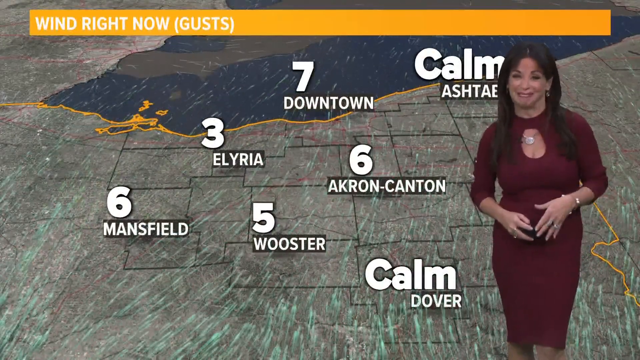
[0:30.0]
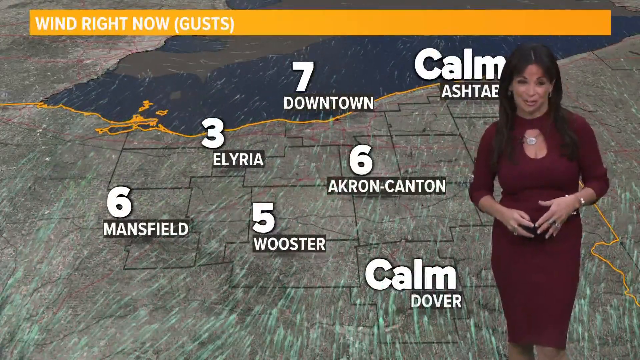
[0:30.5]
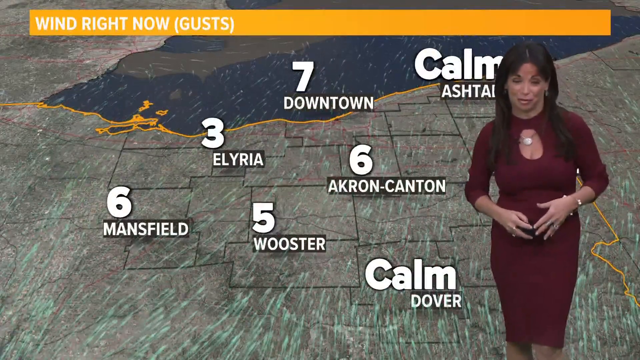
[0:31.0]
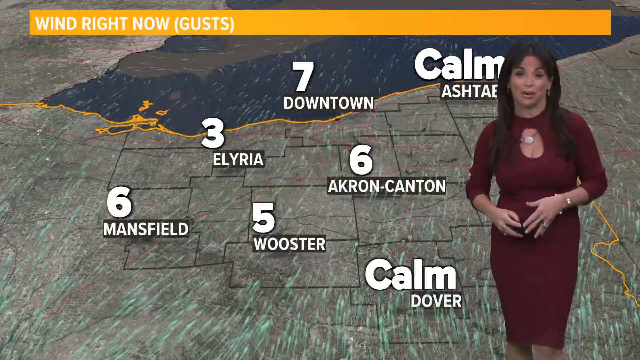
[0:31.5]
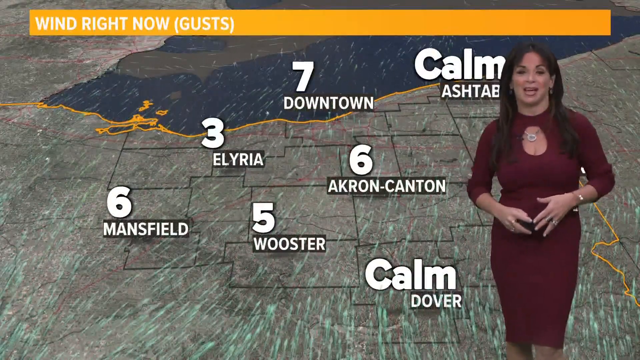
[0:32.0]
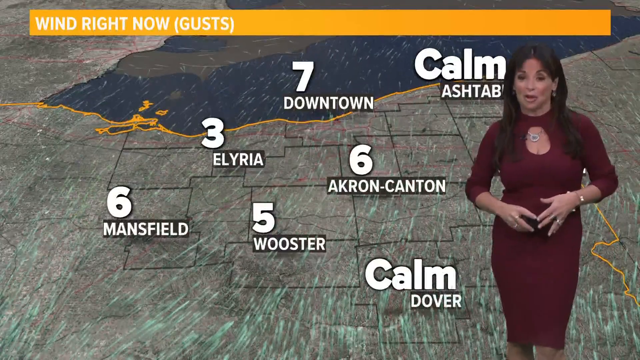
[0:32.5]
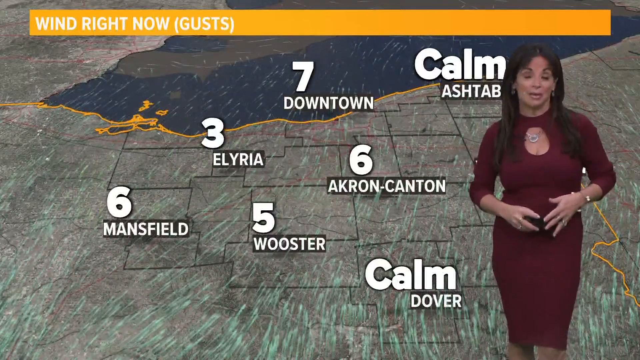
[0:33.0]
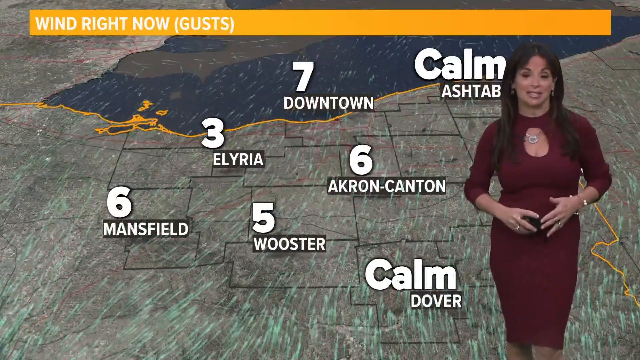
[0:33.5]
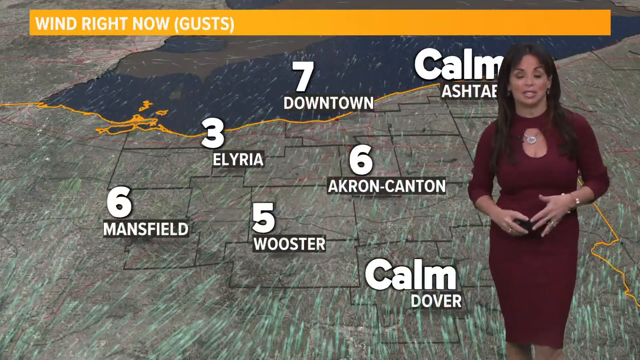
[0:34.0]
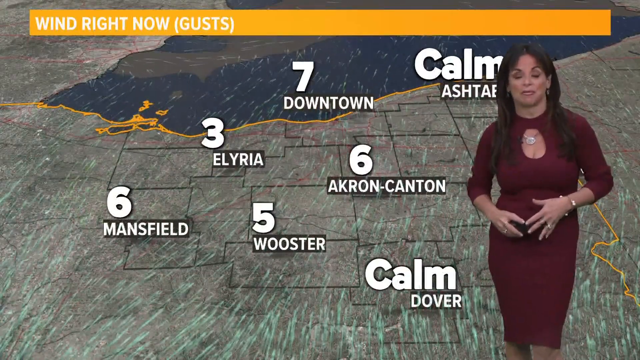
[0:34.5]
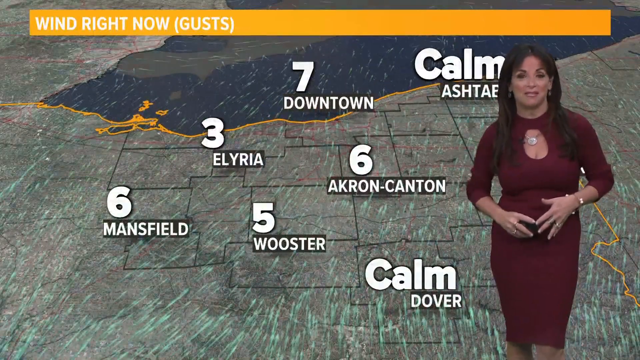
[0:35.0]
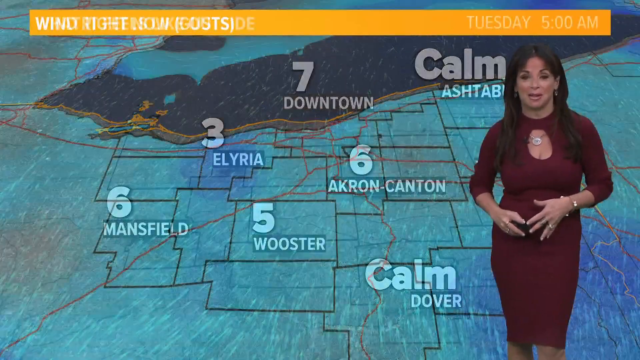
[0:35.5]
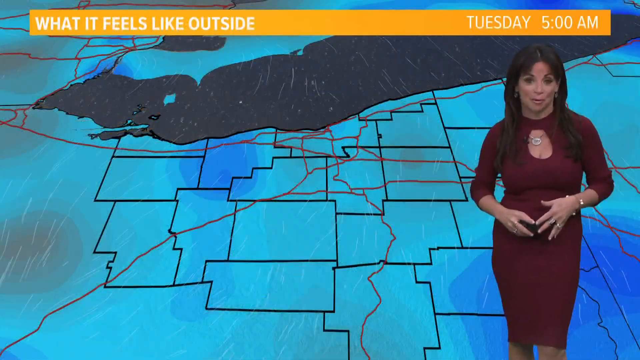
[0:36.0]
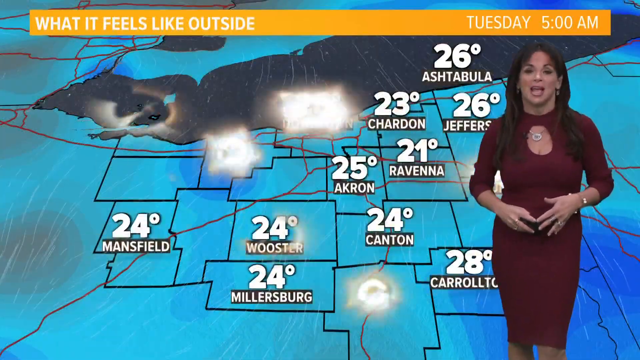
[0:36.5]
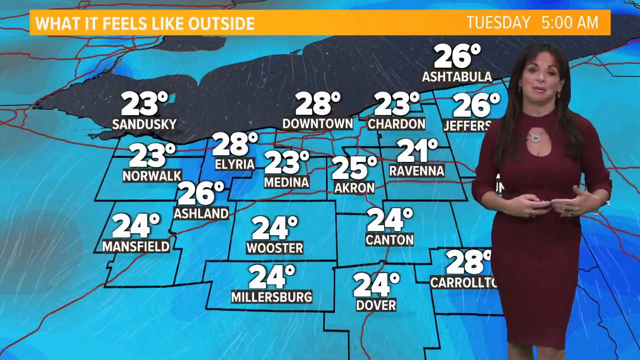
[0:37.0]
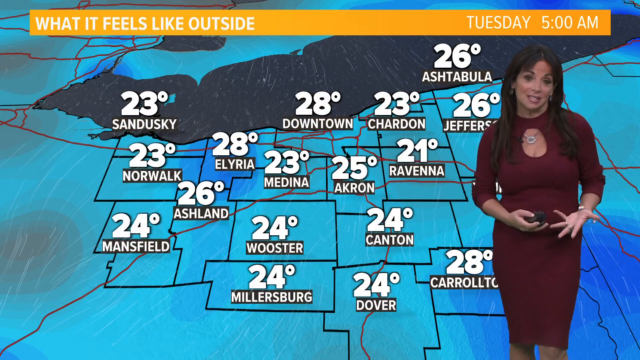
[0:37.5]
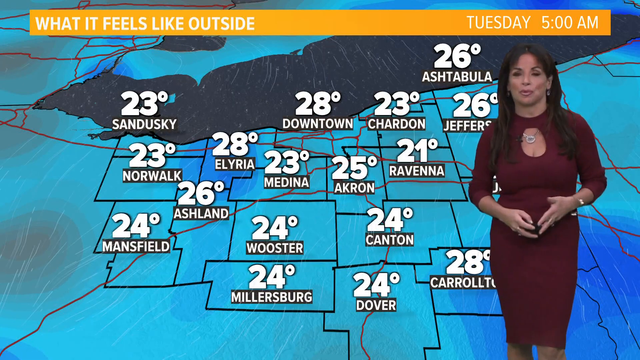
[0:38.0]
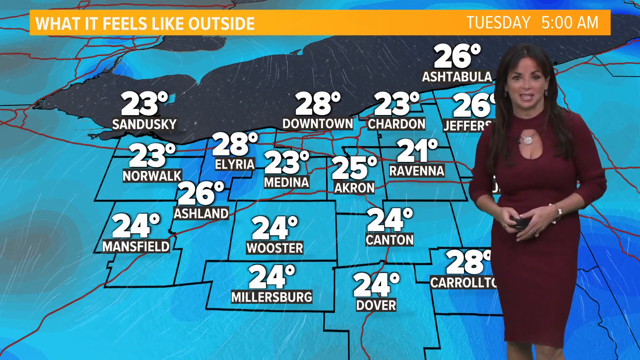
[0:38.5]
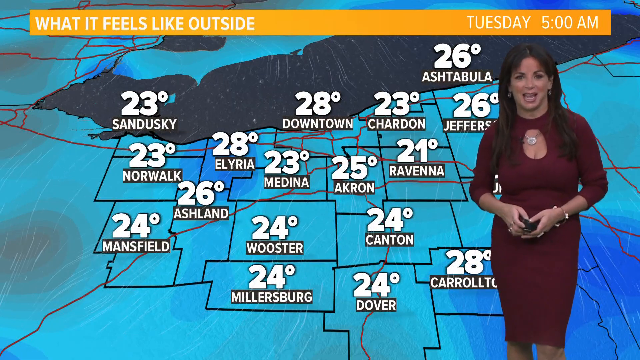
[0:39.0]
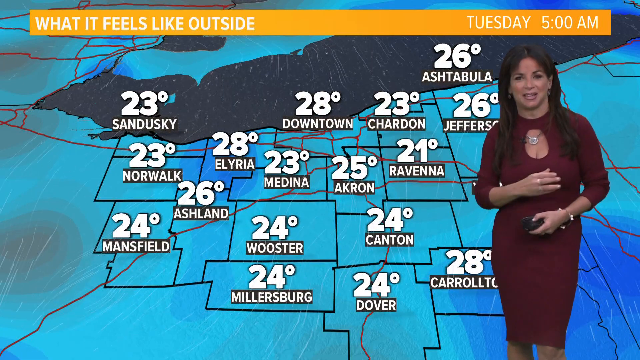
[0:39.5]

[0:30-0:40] A map shows various cities, with an orange banner at the top reading "wind right now" and, in parentheses, "gusts." The woman stands on the right side of the screen. Numbers appear above the cities: 6 above Mansfield, 3 above Elyria, 7 above downtown, 5 above Wooster, and 6 above Akron-Canton. At the bottom right, near the woman in the burgundy dress, the words "Calm" and "Dover" are visible, with "Calm" much larger than "Dover."